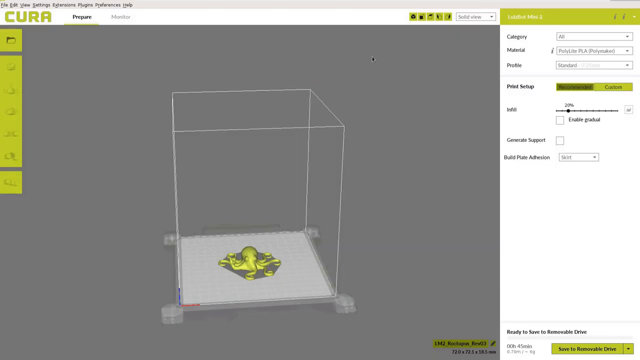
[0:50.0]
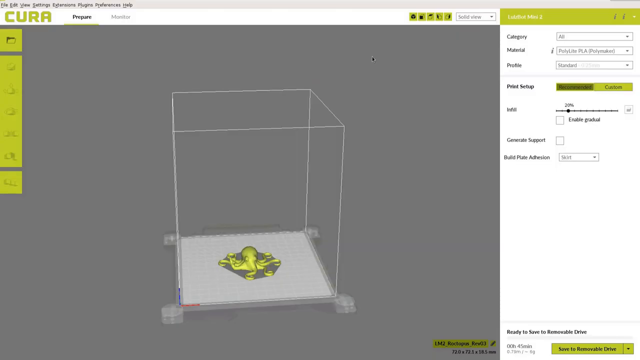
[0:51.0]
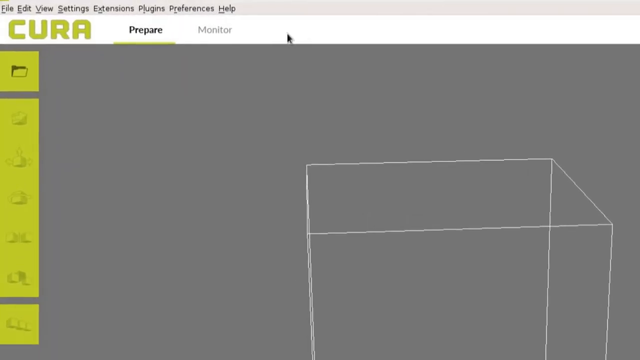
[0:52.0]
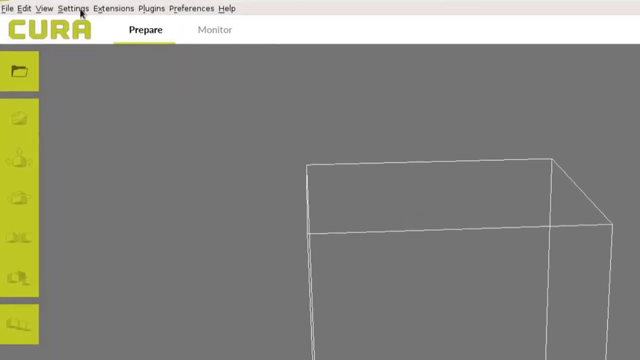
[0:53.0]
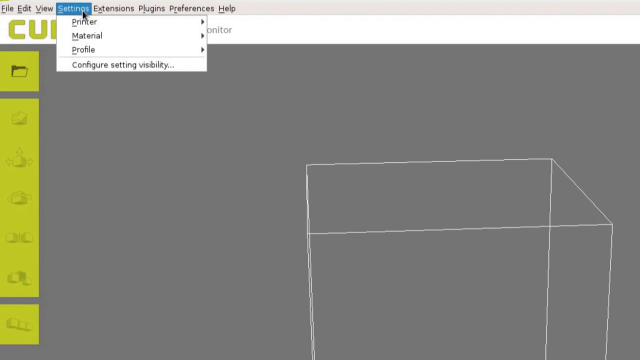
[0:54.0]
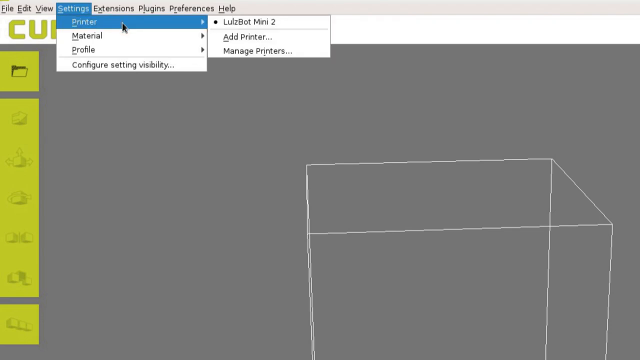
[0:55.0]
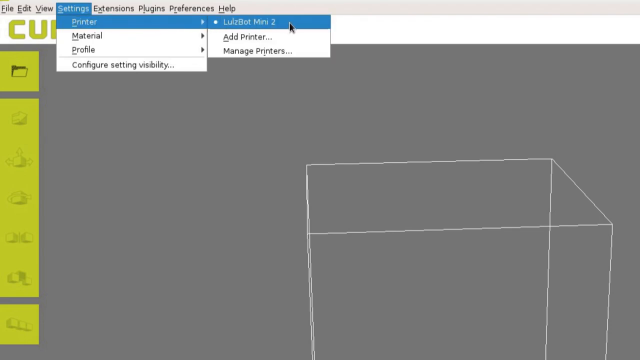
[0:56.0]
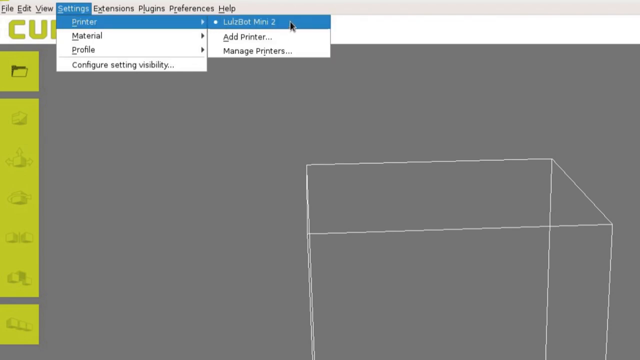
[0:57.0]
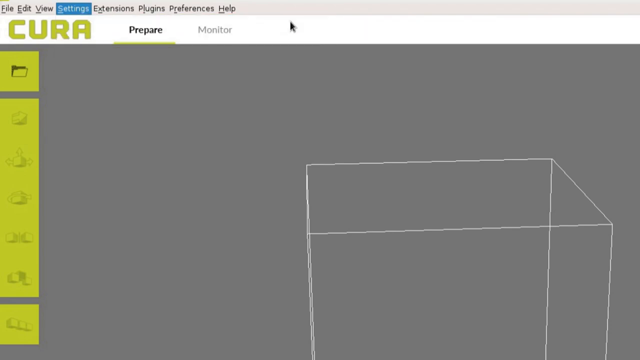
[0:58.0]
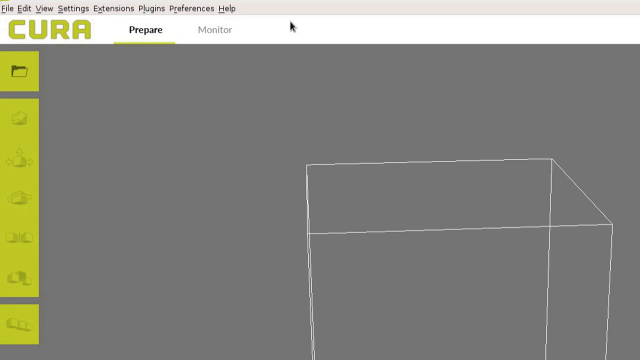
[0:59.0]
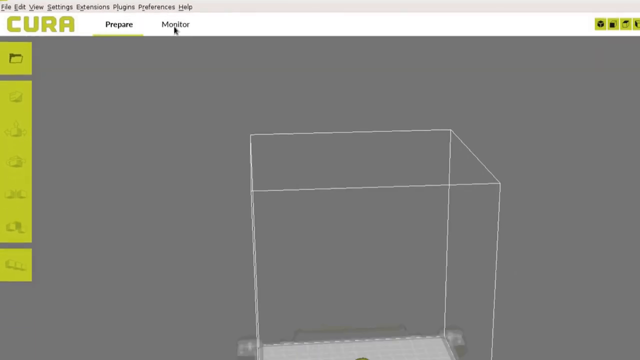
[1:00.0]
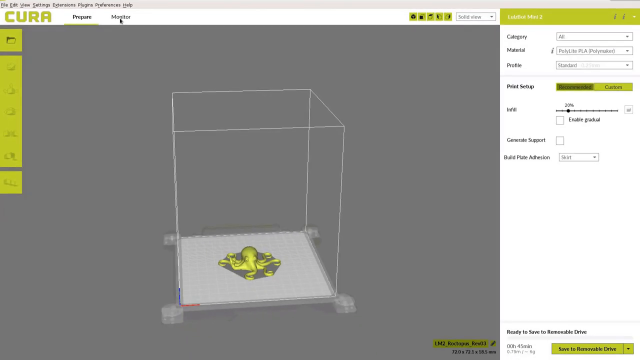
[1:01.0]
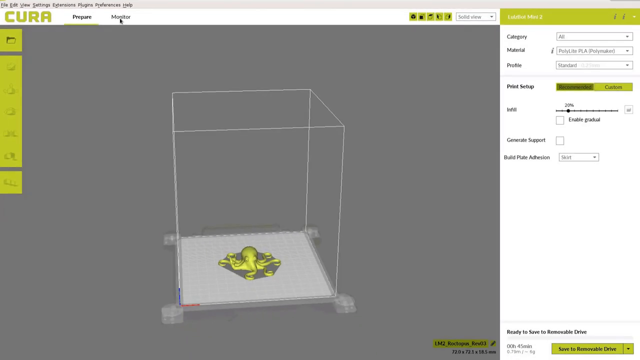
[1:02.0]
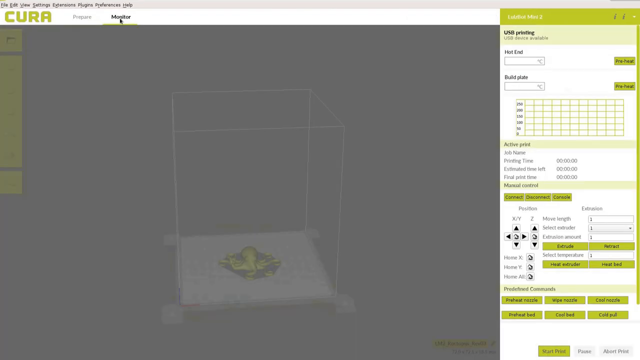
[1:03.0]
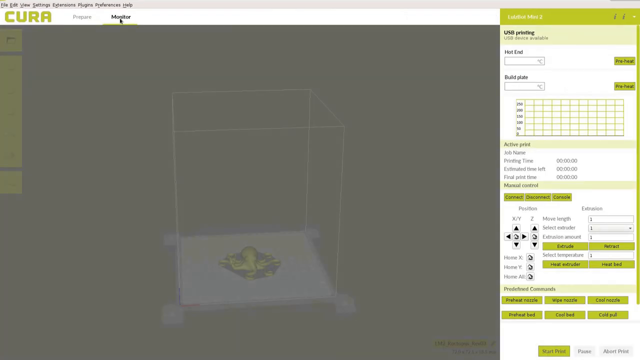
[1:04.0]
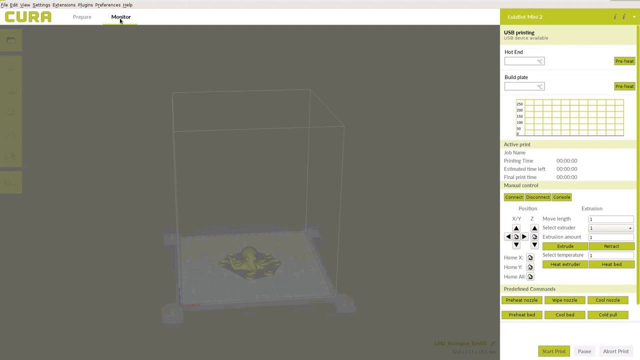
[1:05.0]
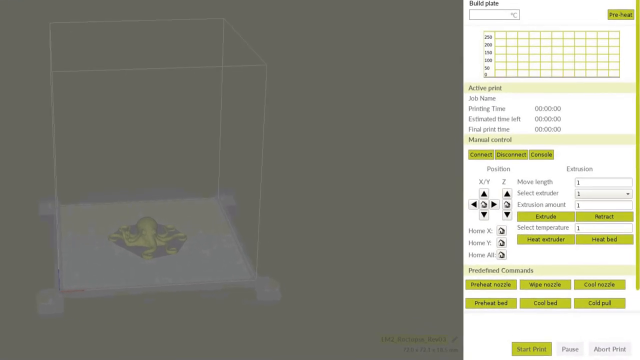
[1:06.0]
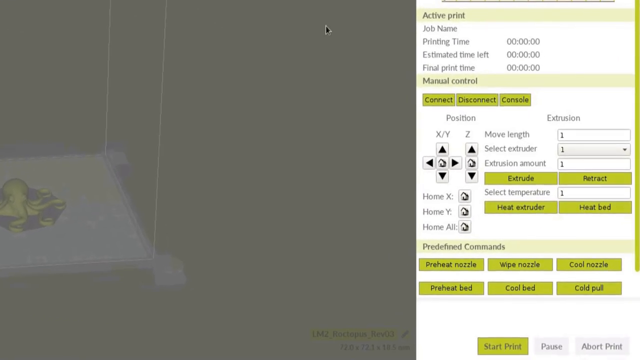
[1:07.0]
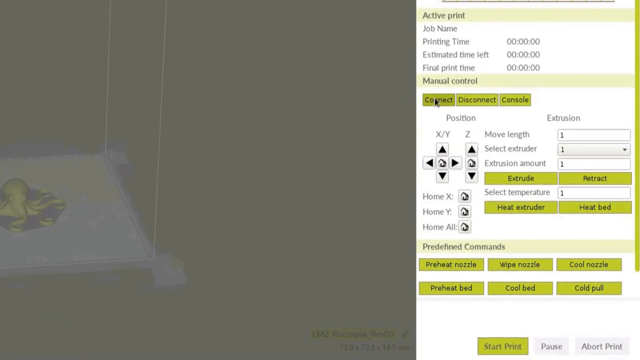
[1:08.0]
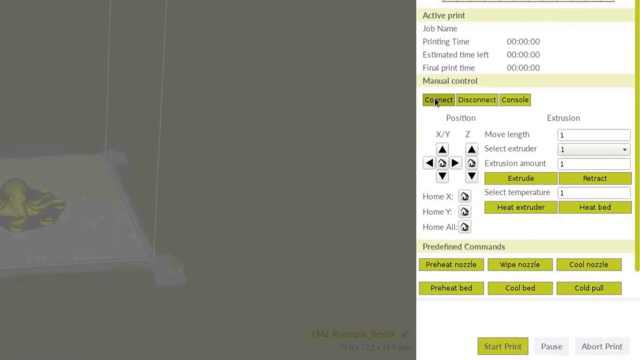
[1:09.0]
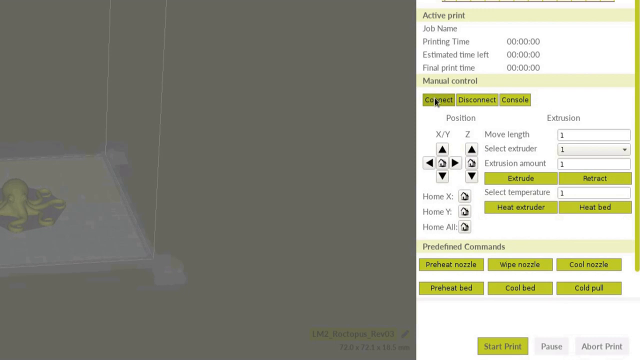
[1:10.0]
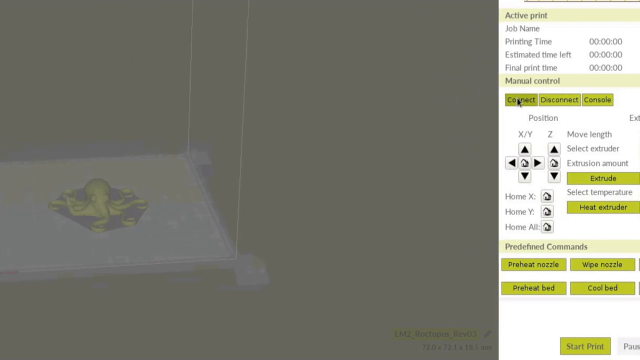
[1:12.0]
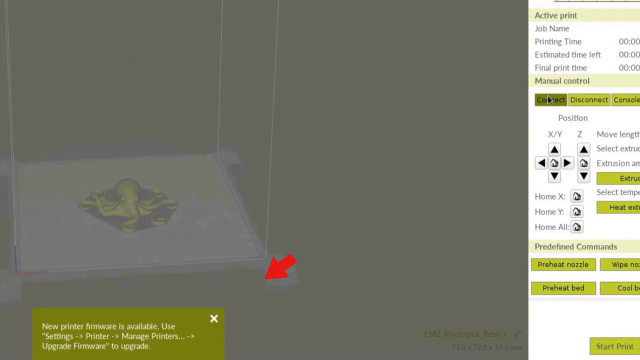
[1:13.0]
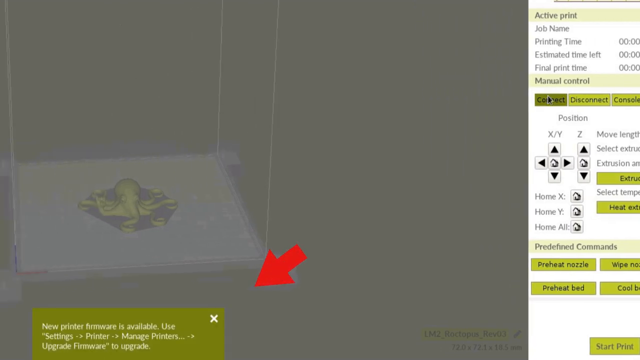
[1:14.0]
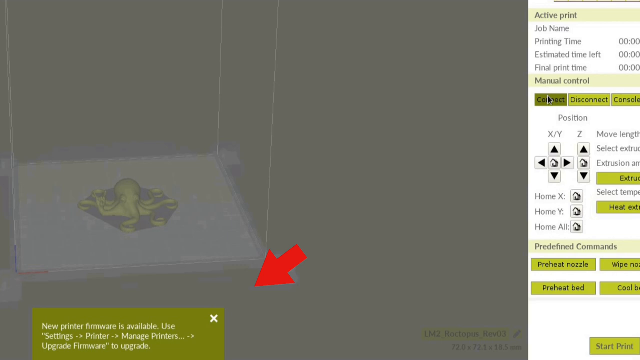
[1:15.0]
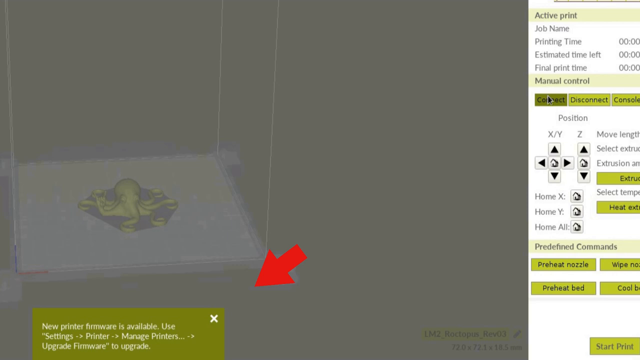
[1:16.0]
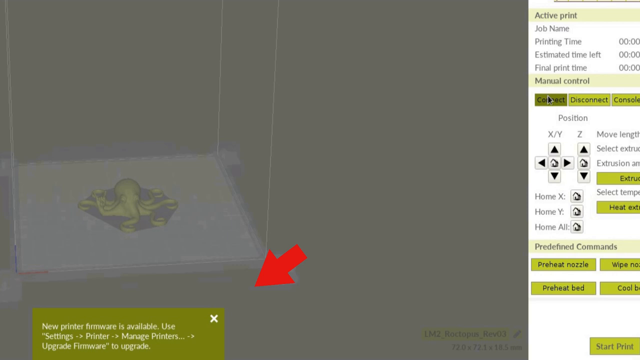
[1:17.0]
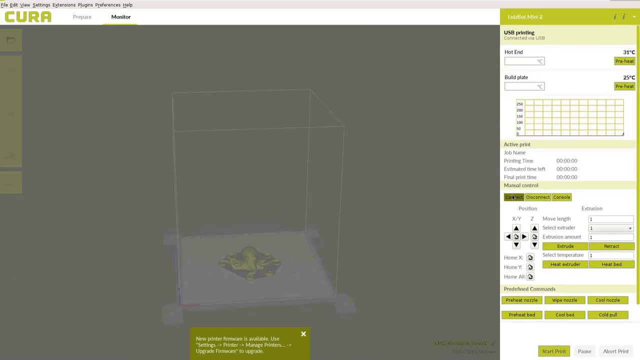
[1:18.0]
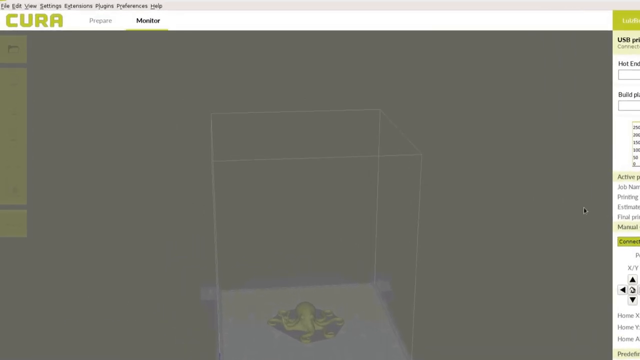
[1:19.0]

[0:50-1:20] The Cura program is open. Most of the screen is dark gray, with settings in green and white taking up the right part. The gray area shows the dimensions of a cube; the bottom of the cube is dark silver, and on the silver is a green blob that is hard to identify but seems to be the start of the current print job. Someone clicks the settings menu, chooses printer, and selects the LulzBot as the printer. They then click the word "monitor". The screen goes dark, with the outline still visible, and statistics for the active print job appear on the right. These include controls to change the x, y, or z-axis positions, set an extrusion amount, select an extruder, select a temperature, and give predefined commands for heating, wiping and cooling the nozzle, preheating, cooling the bed, and a cold pull. A message then appears on the left of the screen saying that new firmware is available.